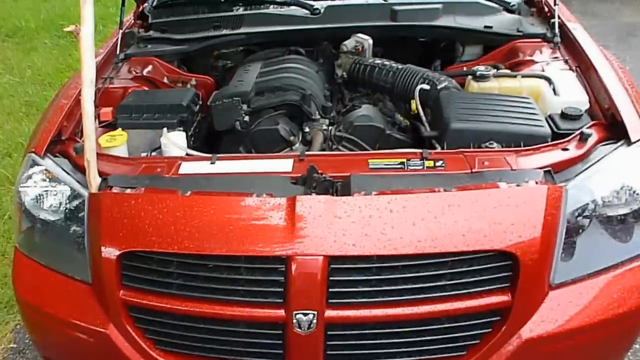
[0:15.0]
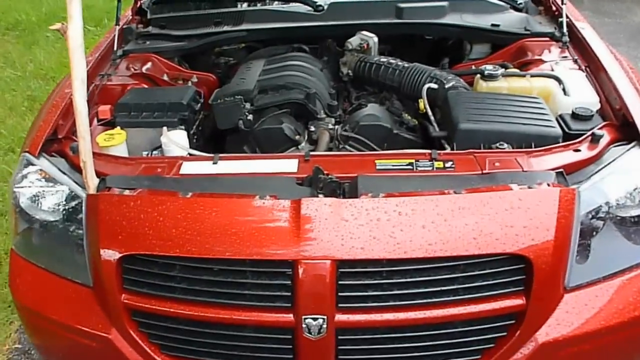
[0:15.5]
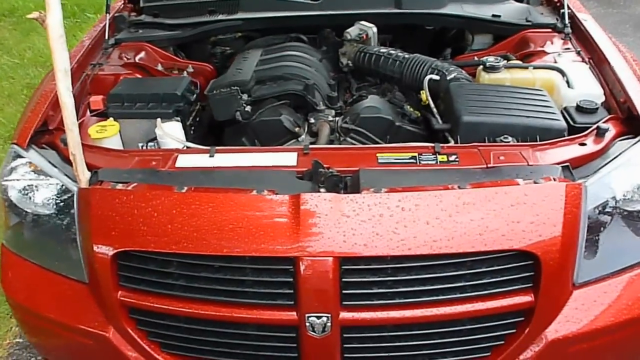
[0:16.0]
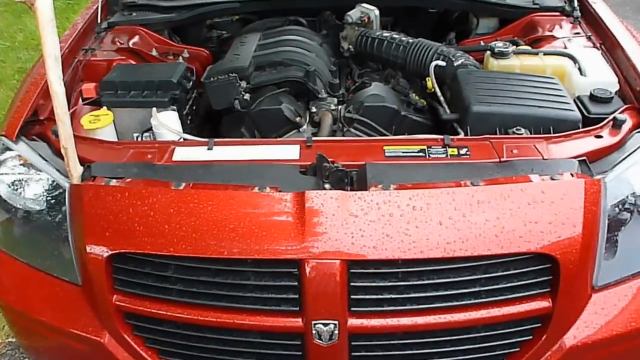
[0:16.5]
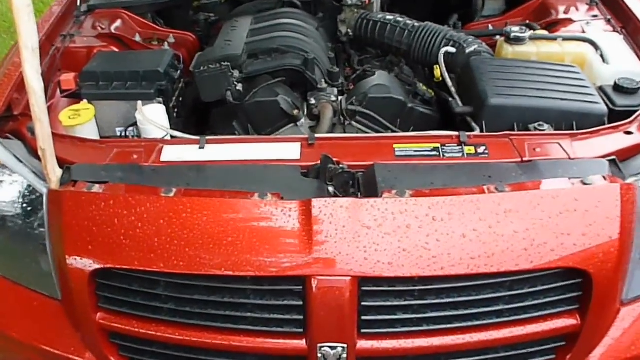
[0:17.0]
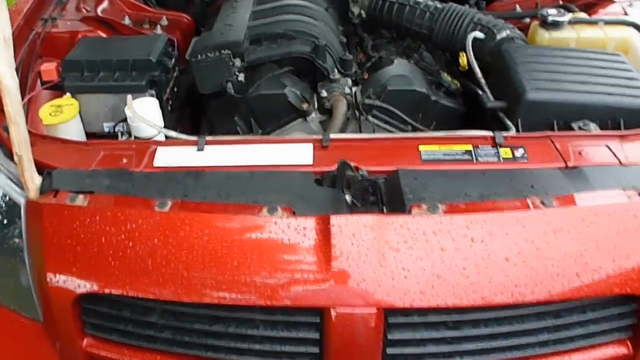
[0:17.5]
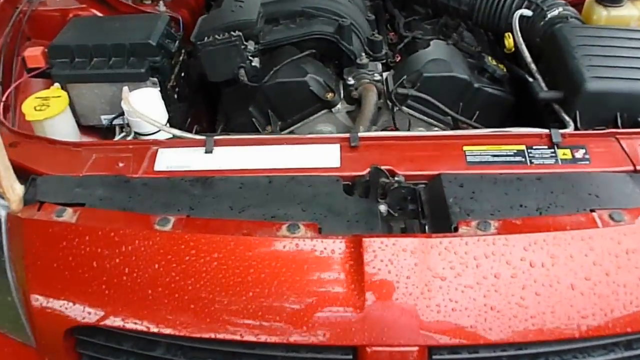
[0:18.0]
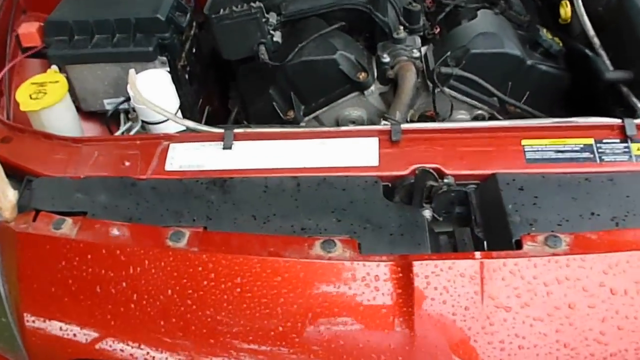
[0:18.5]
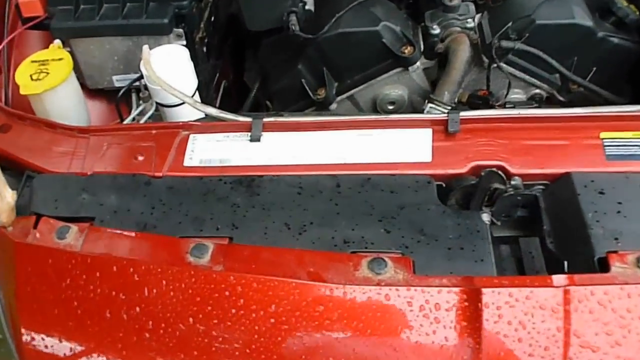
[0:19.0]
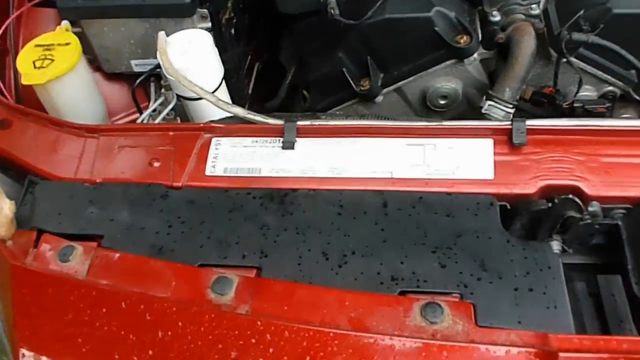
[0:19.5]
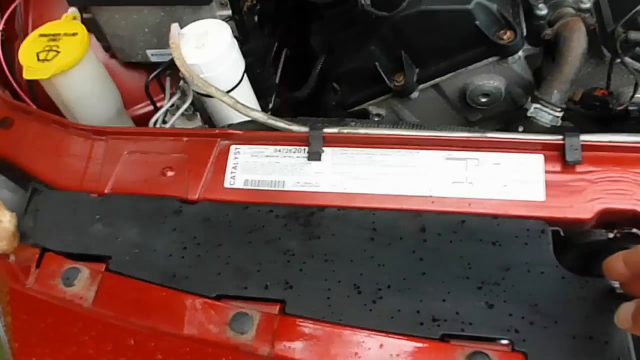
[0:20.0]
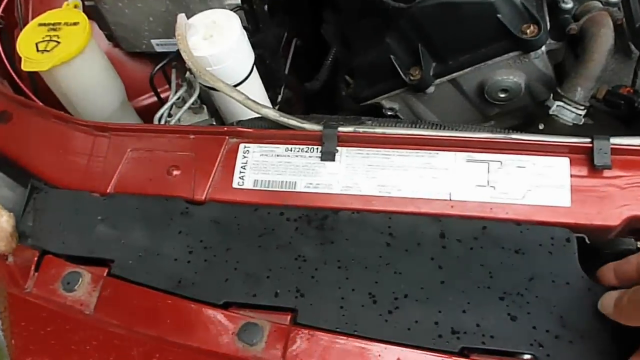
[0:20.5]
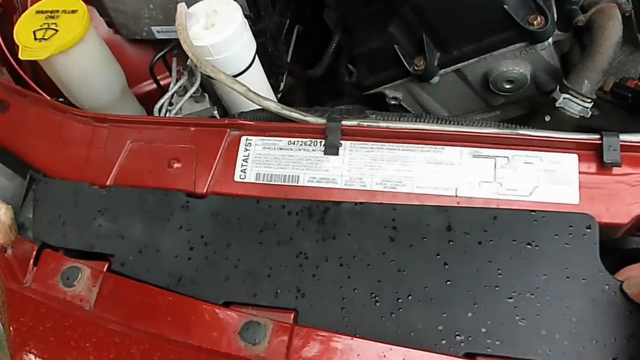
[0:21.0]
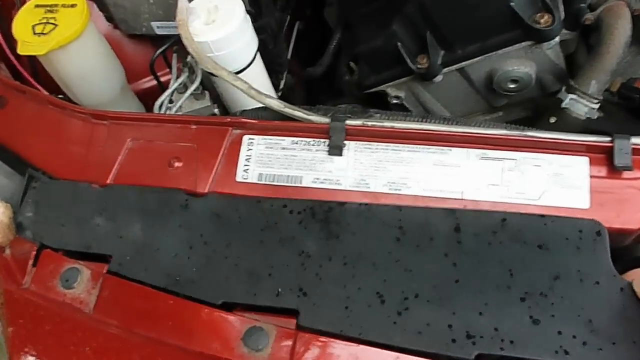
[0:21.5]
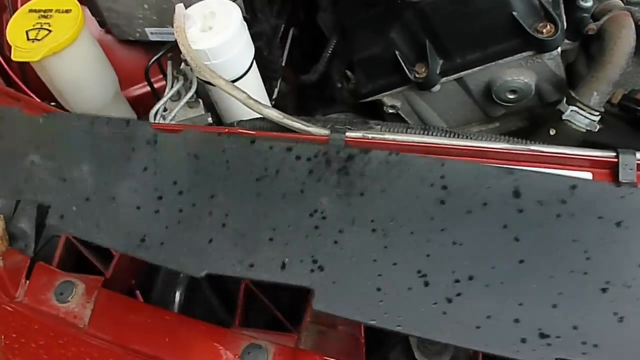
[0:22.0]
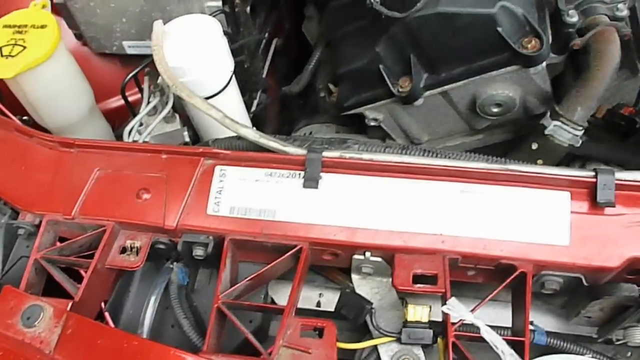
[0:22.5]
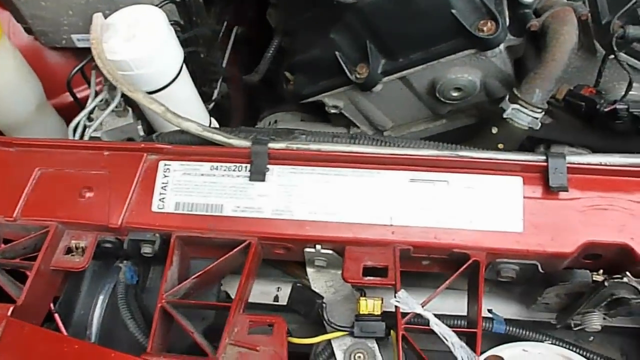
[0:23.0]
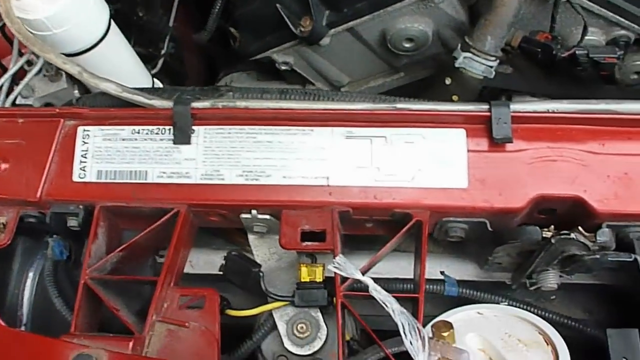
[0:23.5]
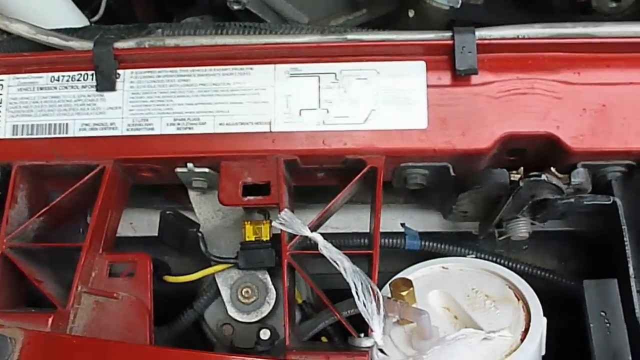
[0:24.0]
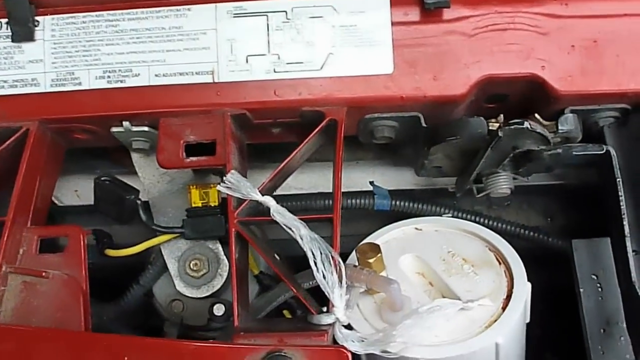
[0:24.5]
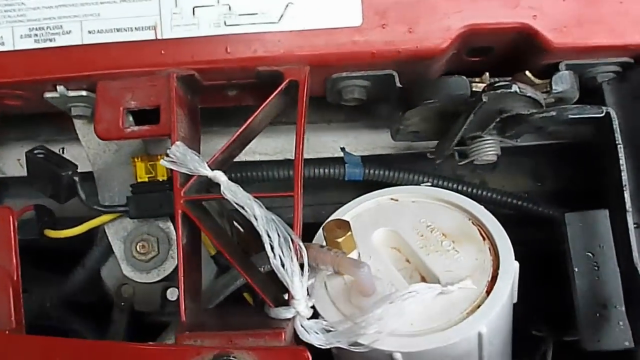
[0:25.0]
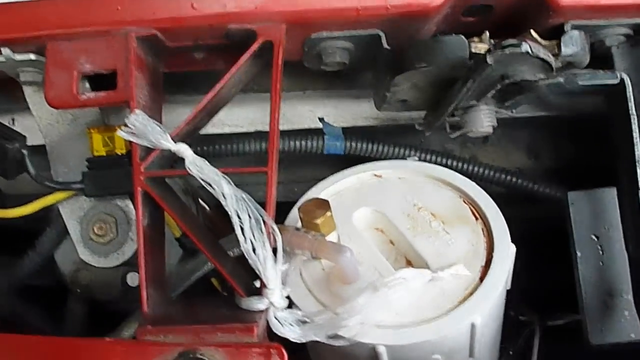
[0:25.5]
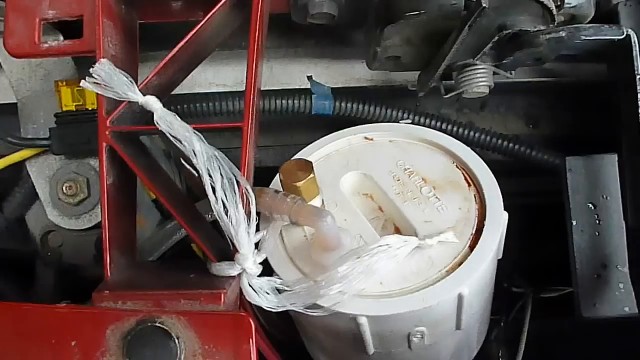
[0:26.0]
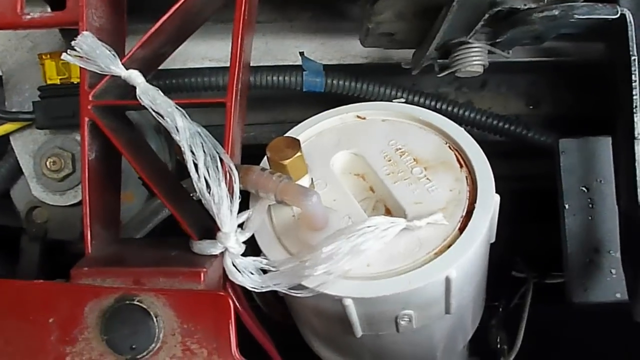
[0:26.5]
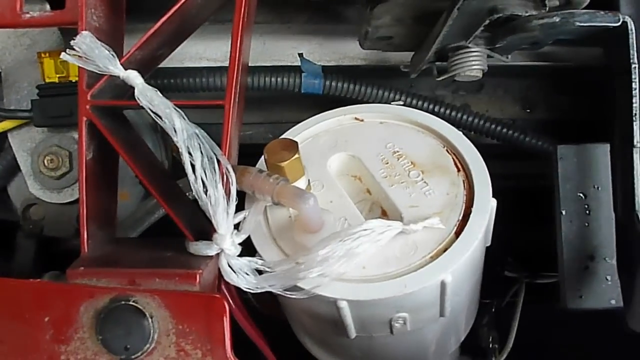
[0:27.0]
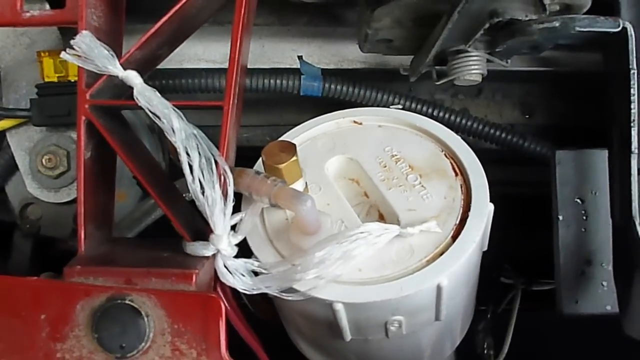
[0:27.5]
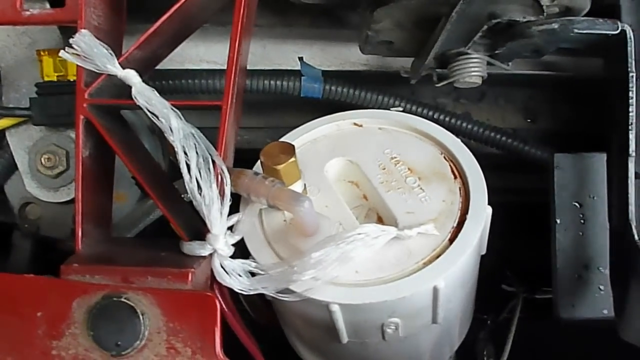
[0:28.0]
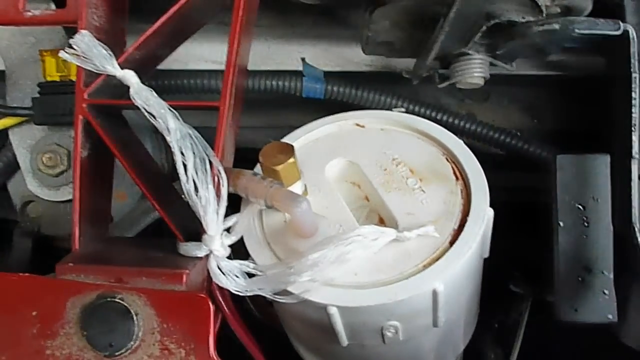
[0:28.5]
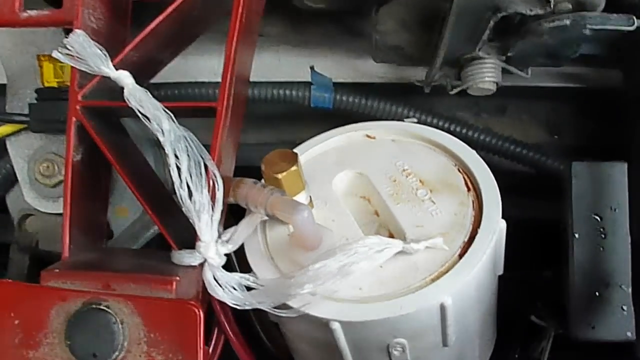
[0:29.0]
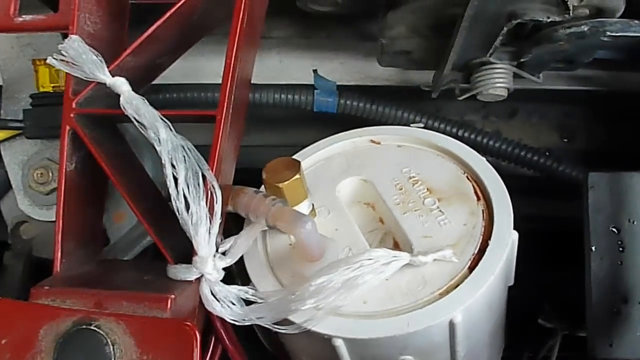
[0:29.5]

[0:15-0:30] The camera is kind of zooming in towards the front of the vehicle. A person removes a panel at the very front, and the focus is on a white plastic area with what looks like a frayed plastic thread, some sort of rope that seems partly unraveled rather than tightly wound. The white object is maybe cylindrical, with maybe a small brass cap. With the hood up, the person removes the thin black panel at the front end of the car, on the left side of the grille; another panel on the right side of the grille seems to be left in place.